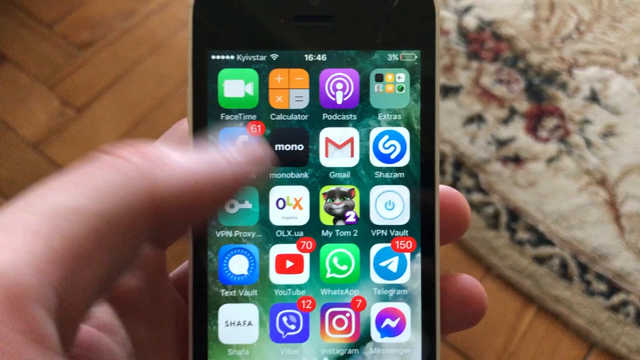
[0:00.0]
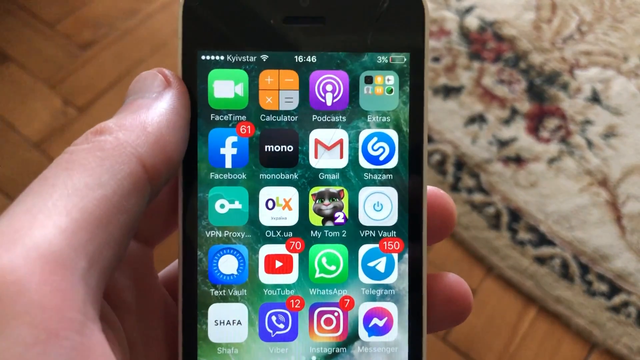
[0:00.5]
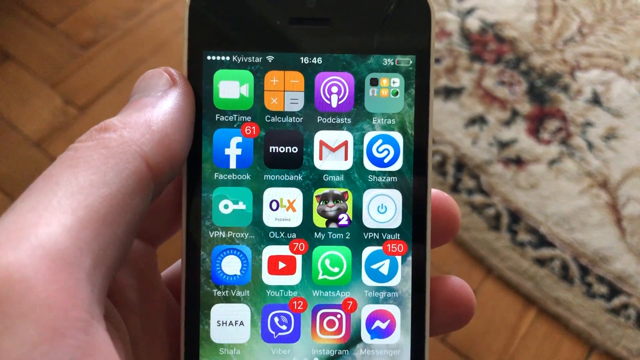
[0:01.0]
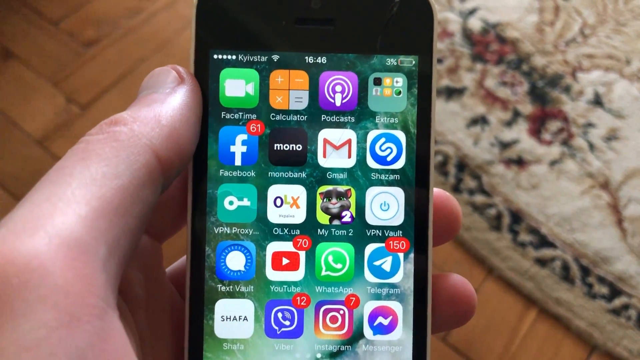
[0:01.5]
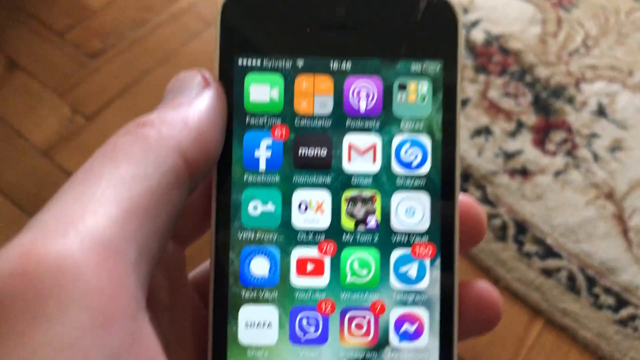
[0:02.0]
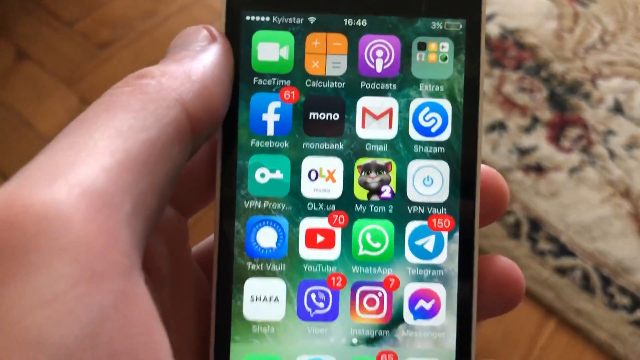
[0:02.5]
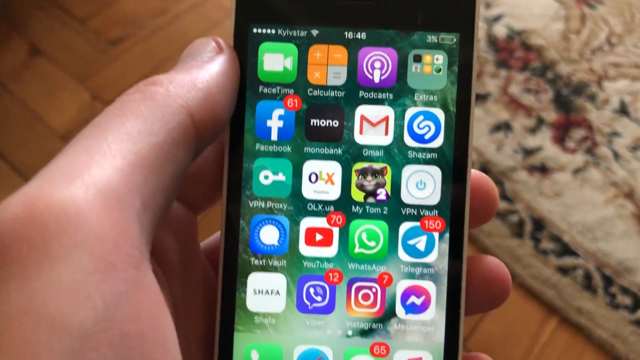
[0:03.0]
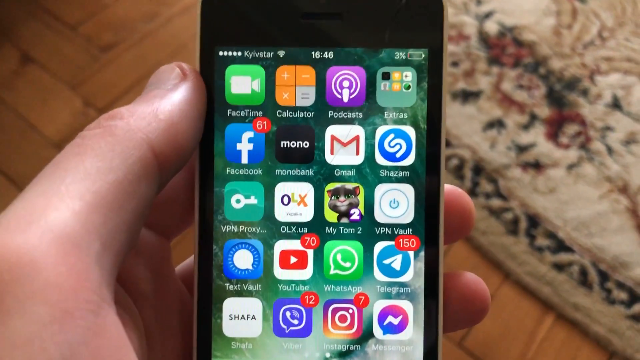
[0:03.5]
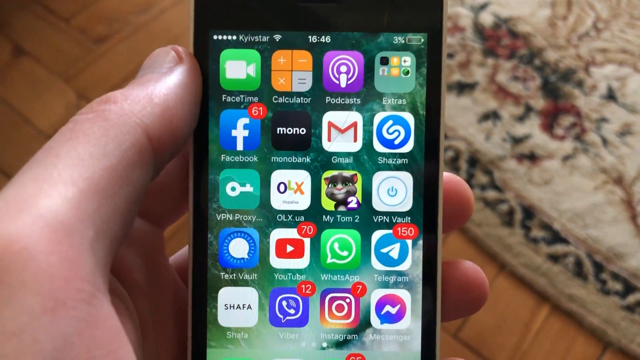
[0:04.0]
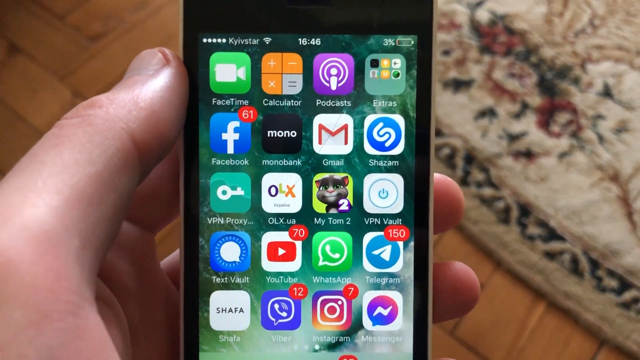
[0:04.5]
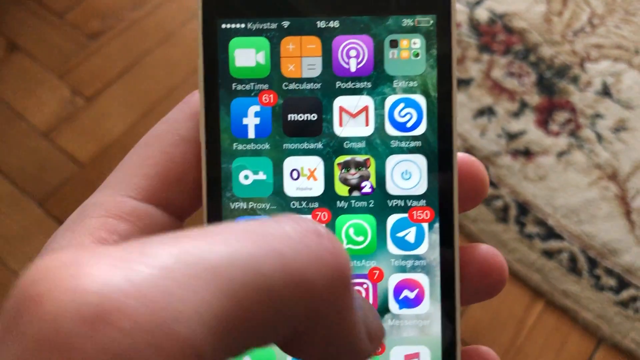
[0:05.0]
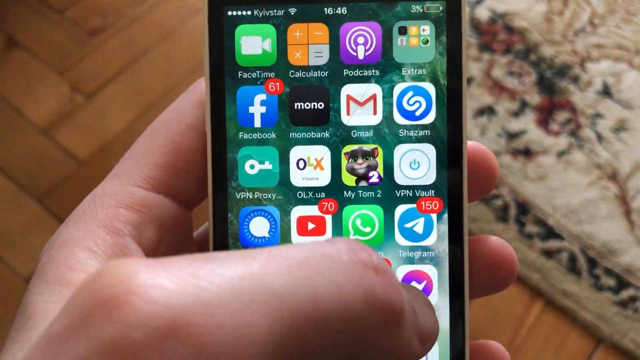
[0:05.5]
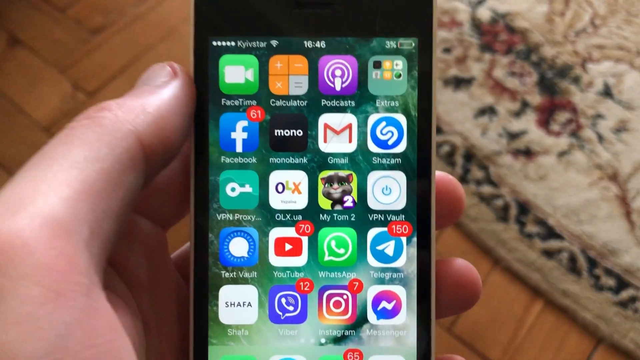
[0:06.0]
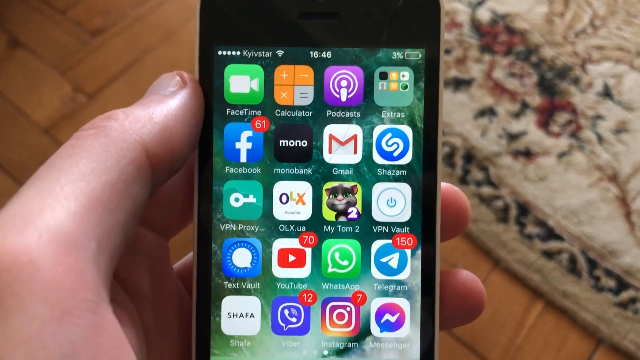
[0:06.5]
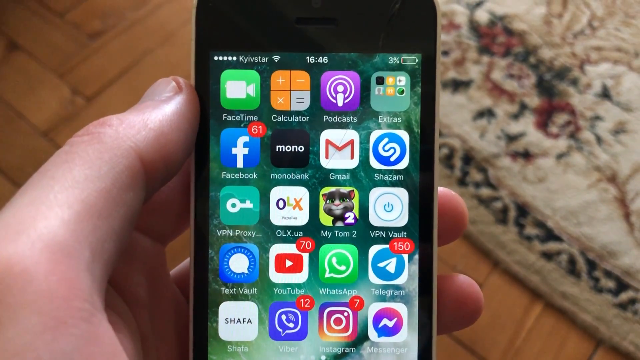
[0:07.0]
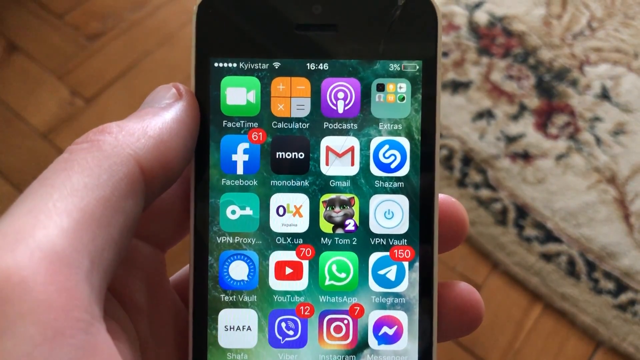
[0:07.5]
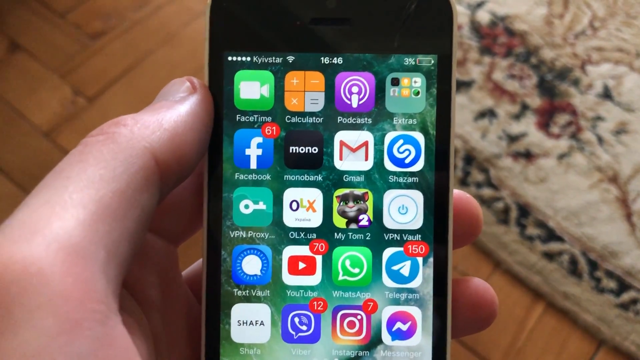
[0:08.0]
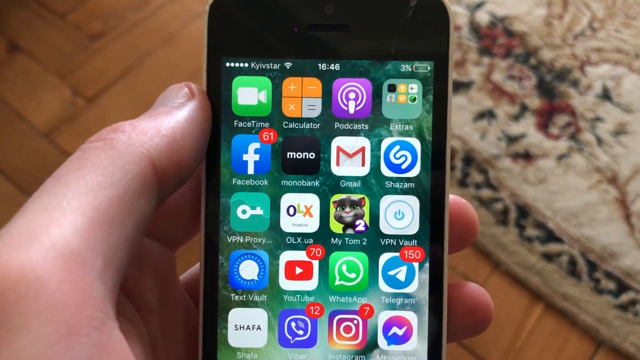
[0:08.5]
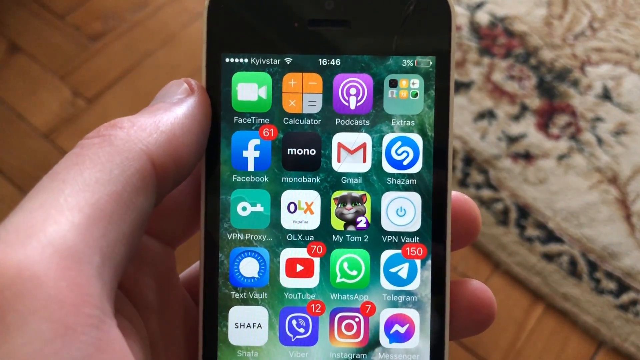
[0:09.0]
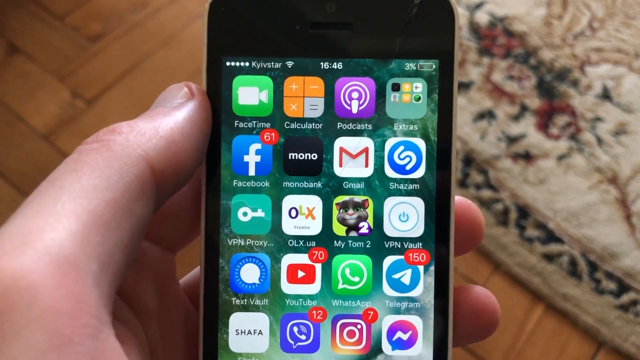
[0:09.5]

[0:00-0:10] Someone holds an iPhone in their hand, and several familiar app icons are visible on the screen. The Facebook app has 61 notices on it, and the Telegram app appears to have 150 notices. An Instagram app shows seven notices, the YouTube app has 70 notices, and what looks like some type of Telephone app has 12 notices. Other apps on the screen include Gmail, Shazam, Podcasts, WhatsApp and VPN Vault, and there is a folder labeled "Extras."